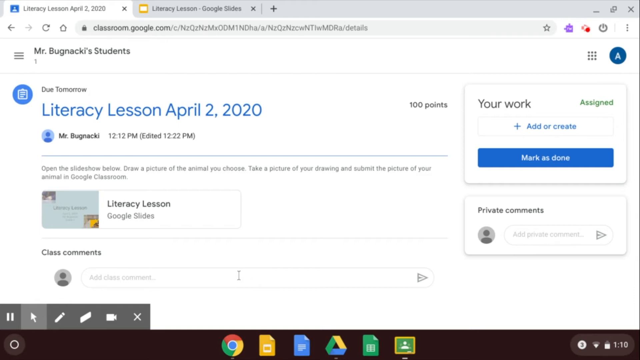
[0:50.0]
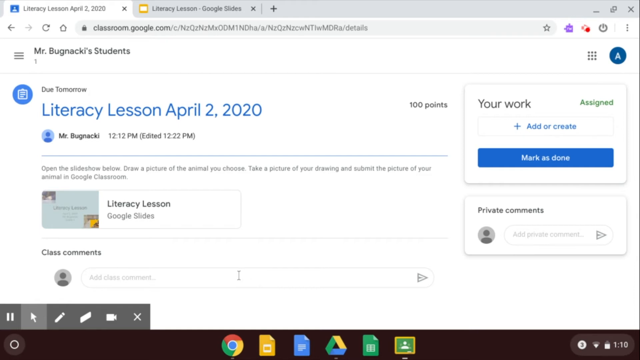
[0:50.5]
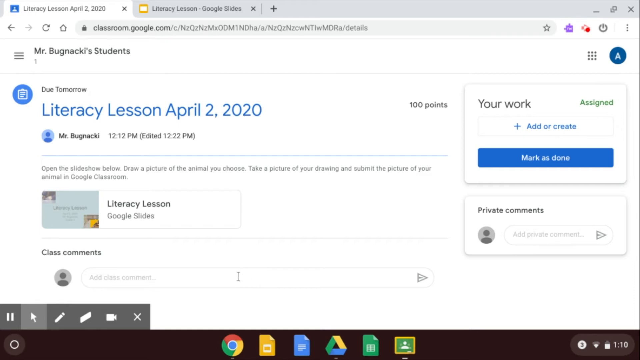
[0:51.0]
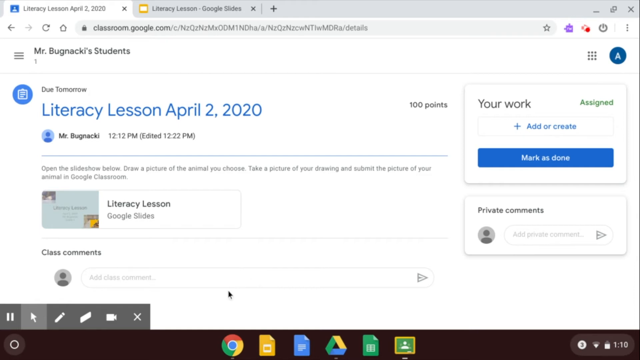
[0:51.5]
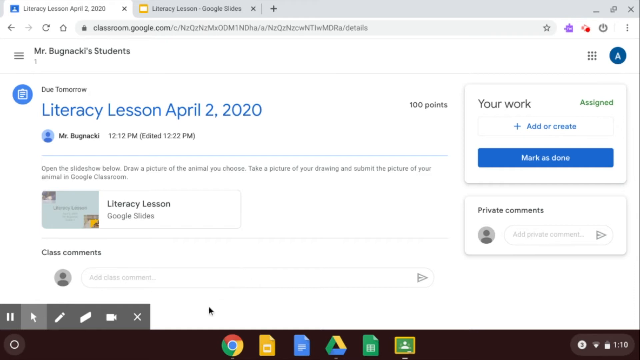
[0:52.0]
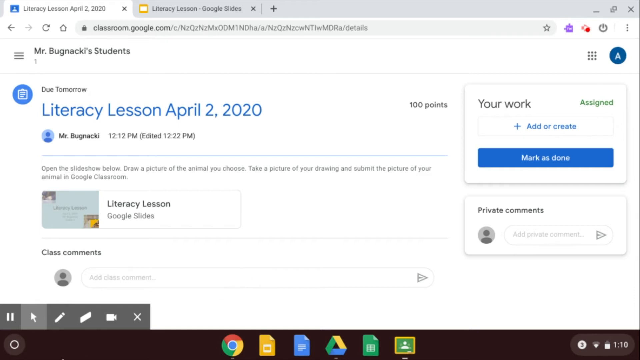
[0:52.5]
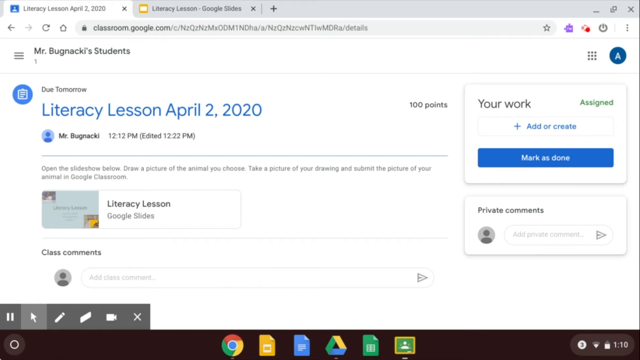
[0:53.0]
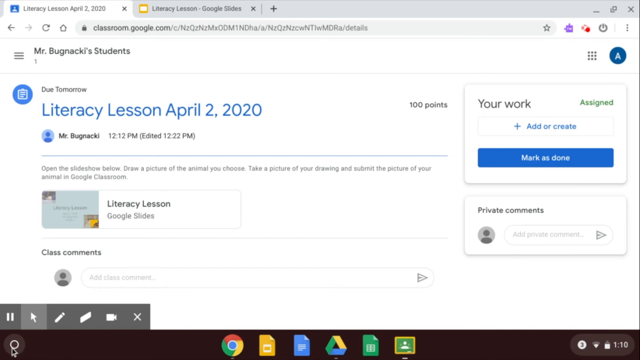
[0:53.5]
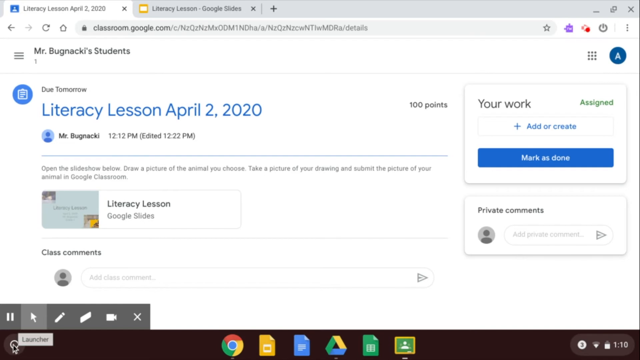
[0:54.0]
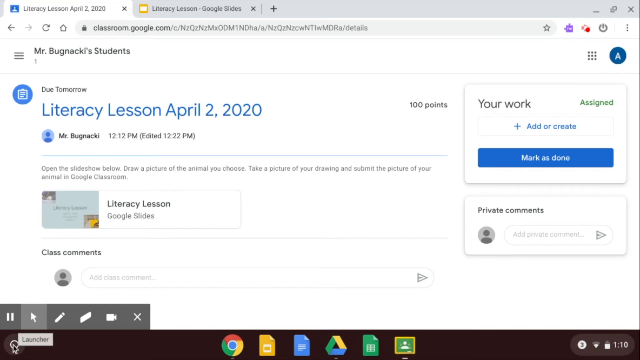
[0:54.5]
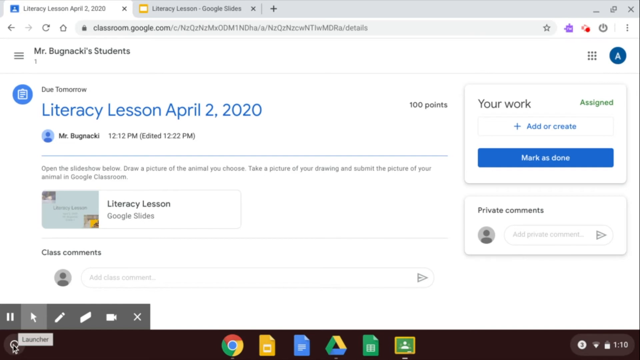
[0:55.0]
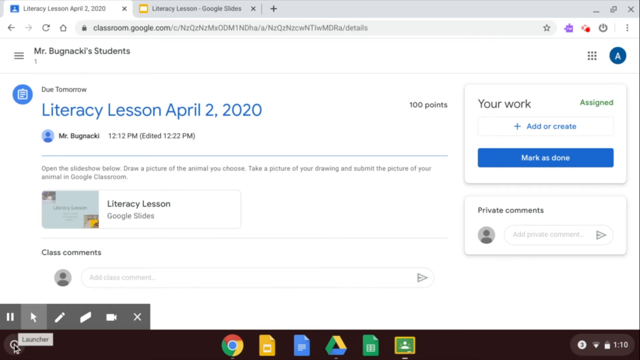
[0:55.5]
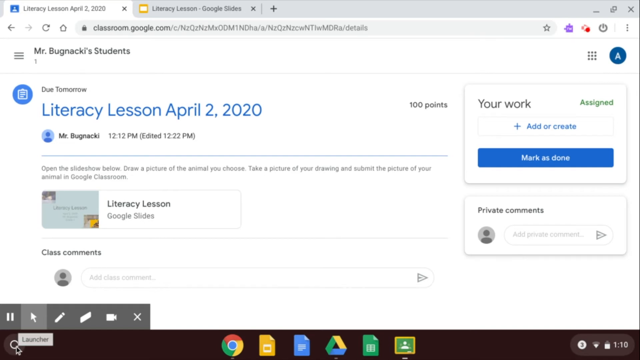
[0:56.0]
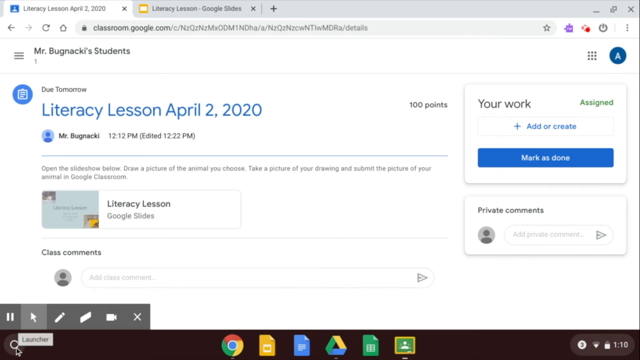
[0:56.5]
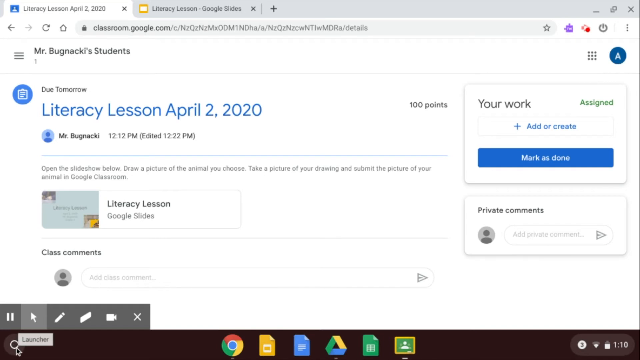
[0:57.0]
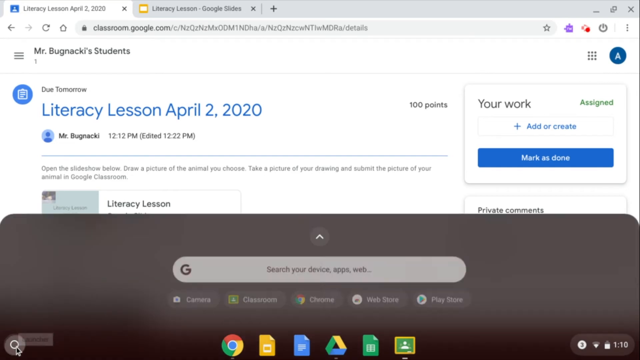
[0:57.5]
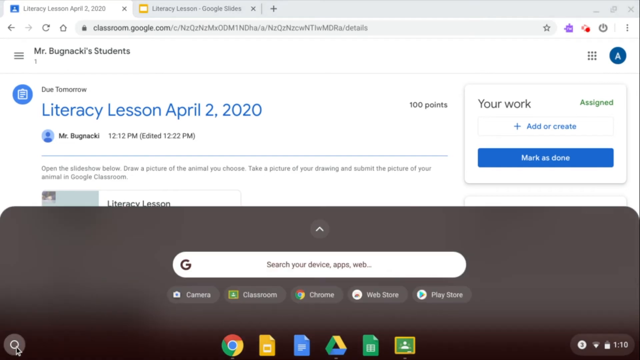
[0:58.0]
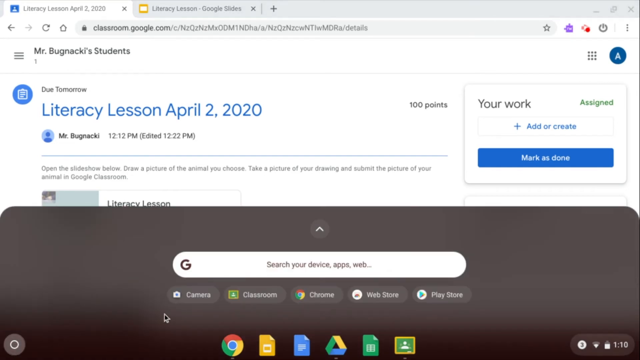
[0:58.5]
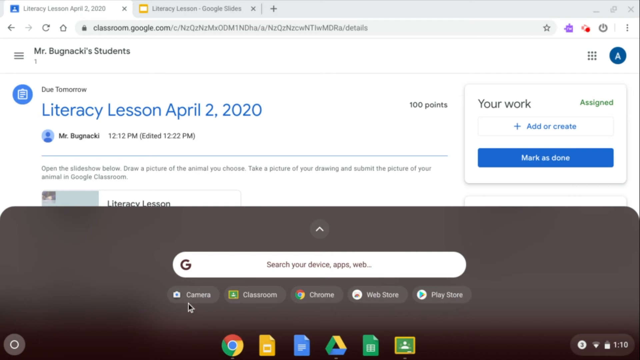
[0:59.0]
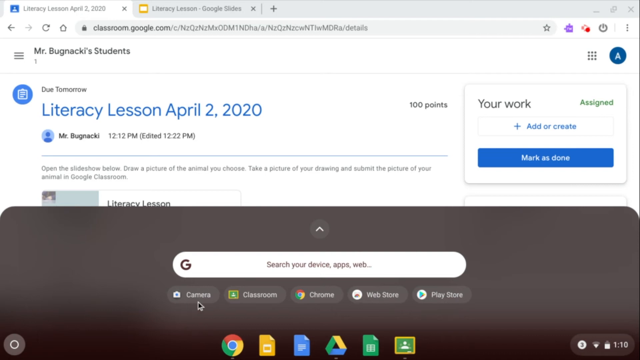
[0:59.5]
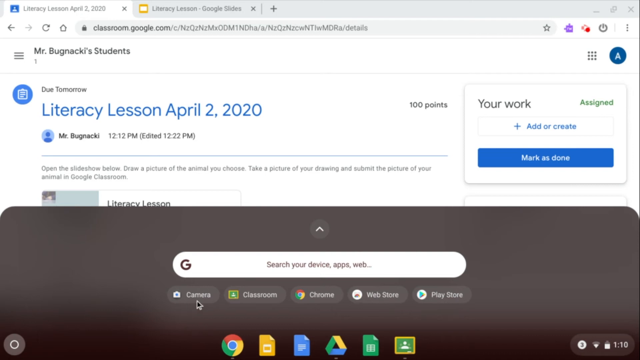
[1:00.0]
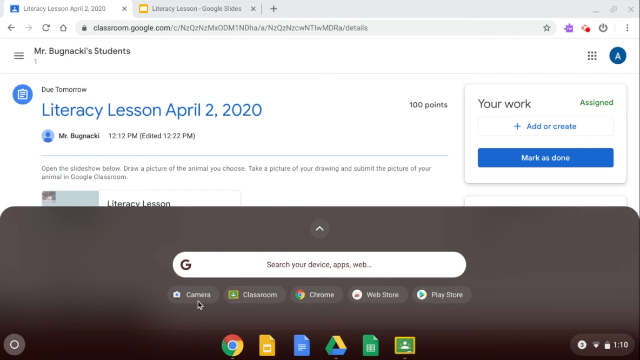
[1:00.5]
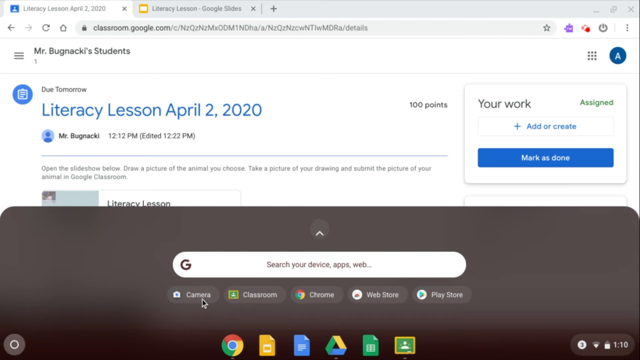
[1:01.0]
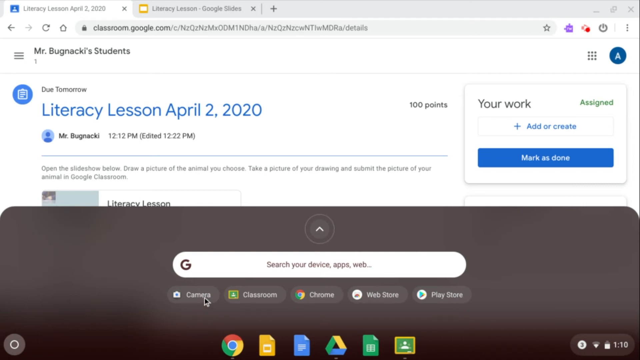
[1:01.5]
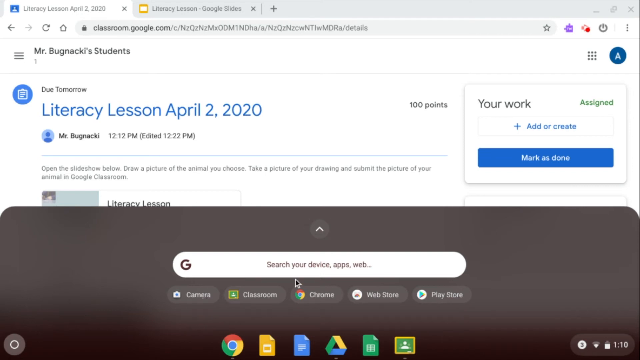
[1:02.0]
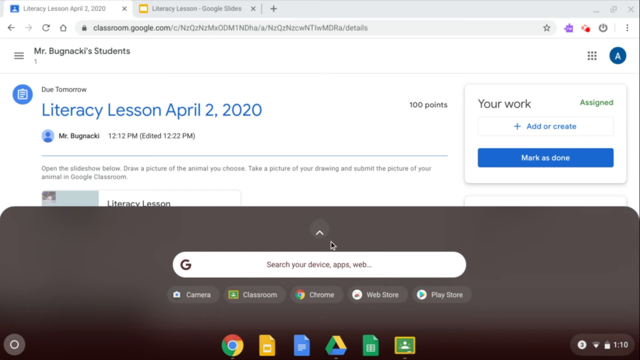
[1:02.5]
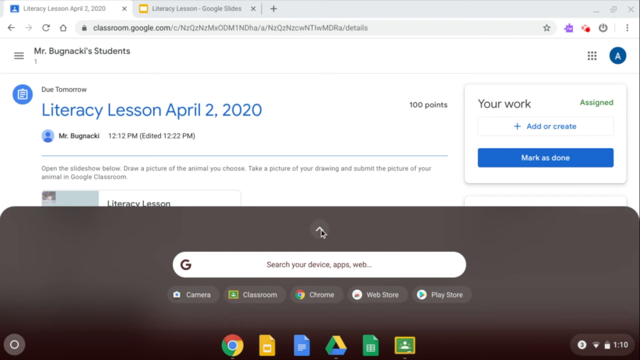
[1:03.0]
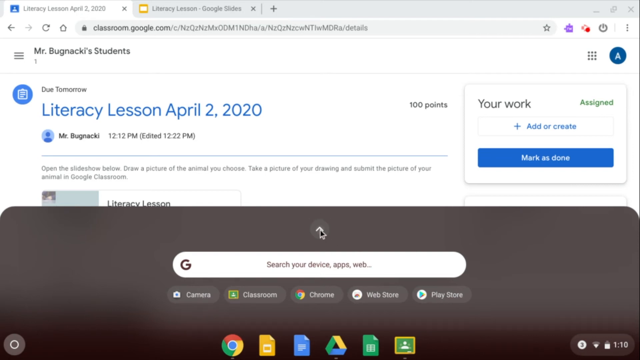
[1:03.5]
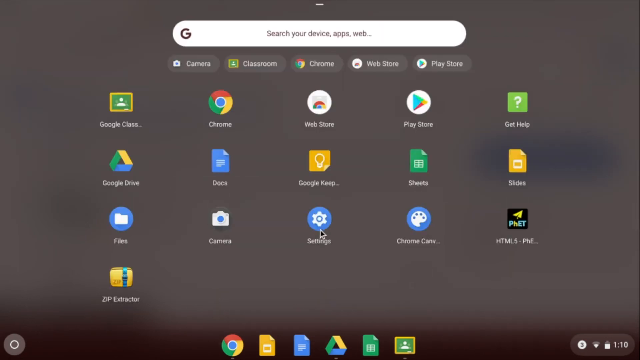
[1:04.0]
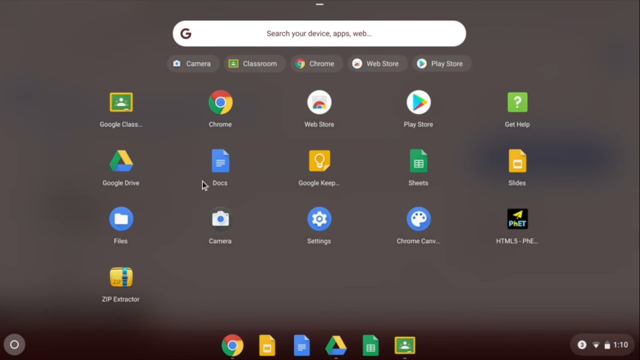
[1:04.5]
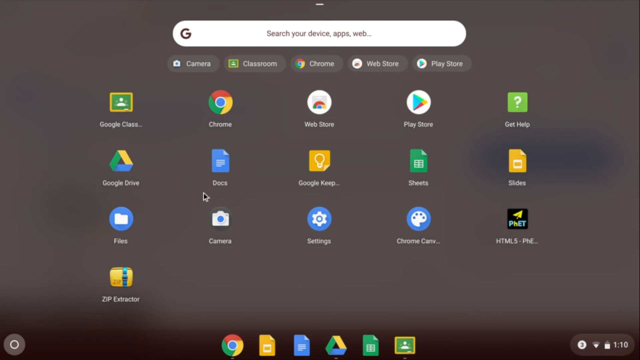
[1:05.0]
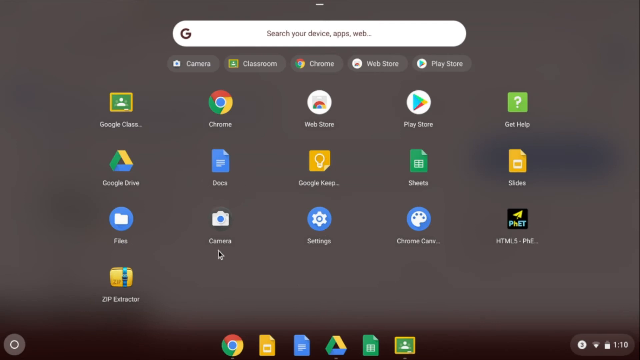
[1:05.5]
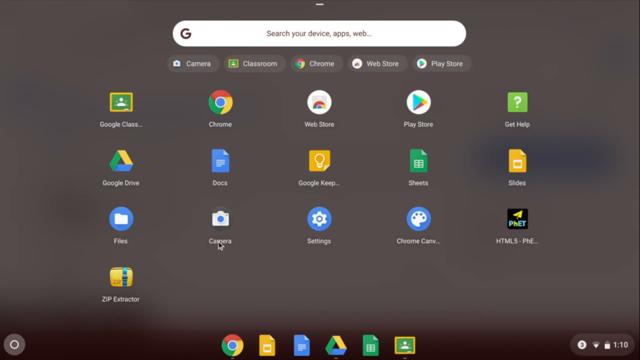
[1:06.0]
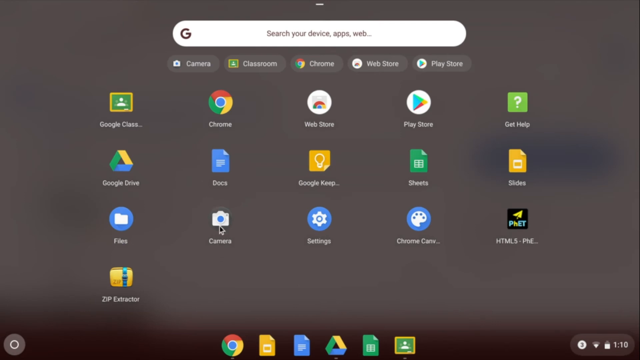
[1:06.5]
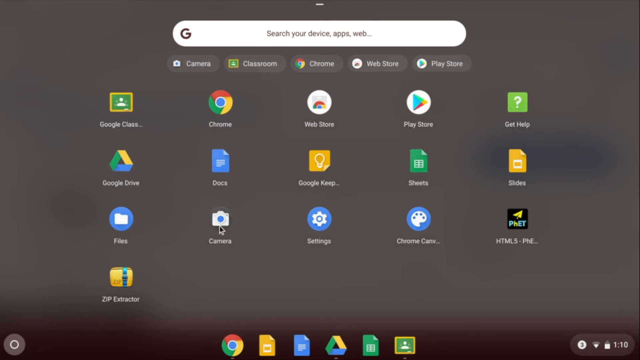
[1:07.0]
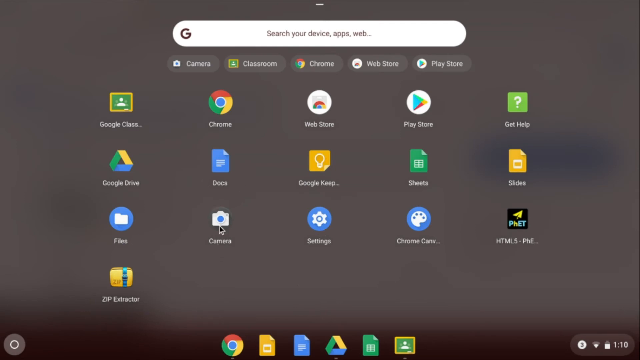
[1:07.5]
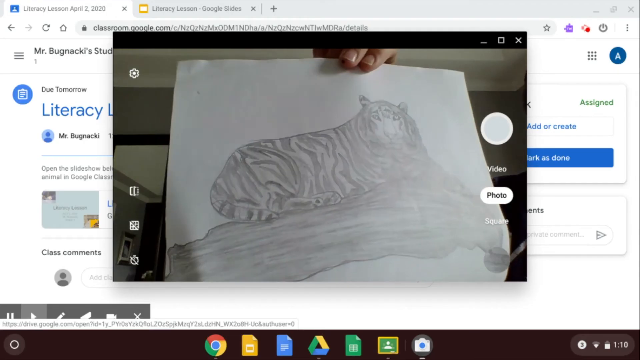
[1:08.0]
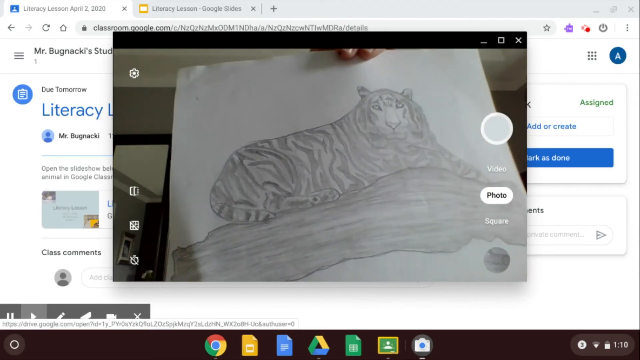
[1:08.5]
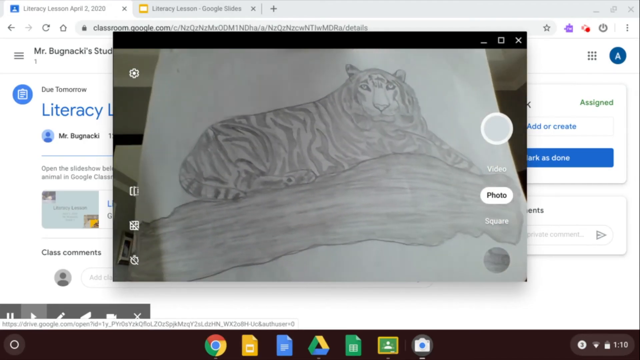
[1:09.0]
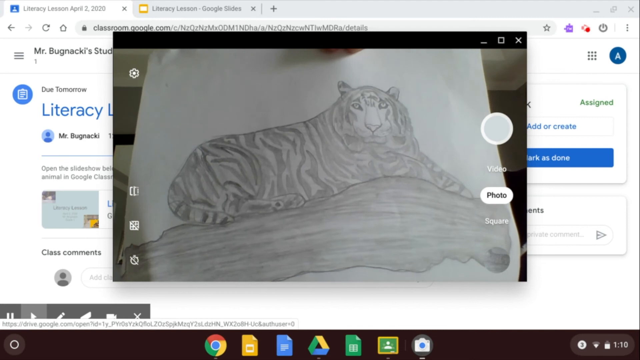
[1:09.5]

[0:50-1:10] The screen shows a page with a literacy lesson dated April 2, 2020. At the bottom of the screen are open tabs, one for Google Chrome and the rest for Microsoft apps. The demonstrator shows various features of the Chromebook: clicking on settings and camera makes a little arrow appear, and clicking it brings up a camera icon. Other options shown include the camera option, classrooms for joining a specific class, the Chrome logo for accessing the Chrome browser, and the Play Store tab for searching for apps.